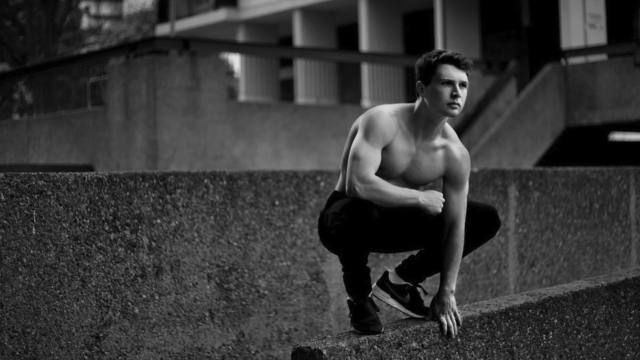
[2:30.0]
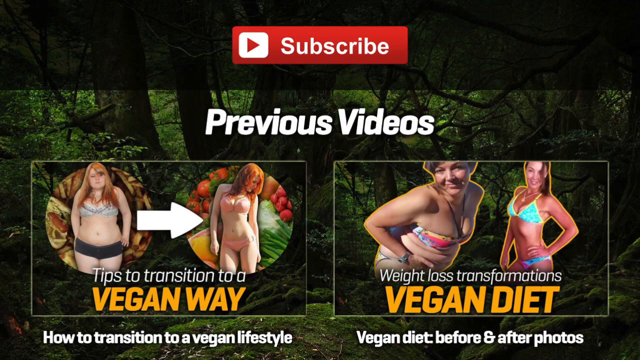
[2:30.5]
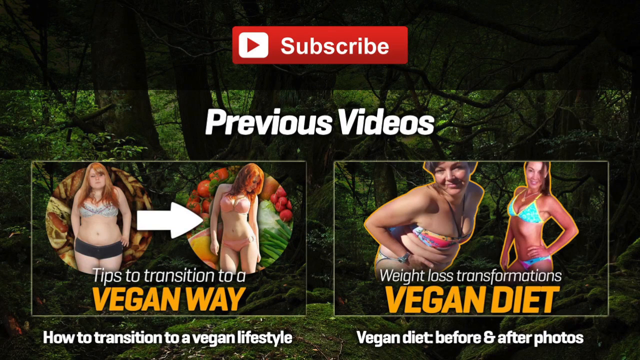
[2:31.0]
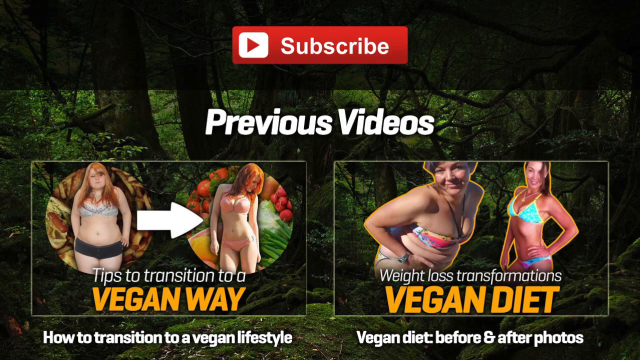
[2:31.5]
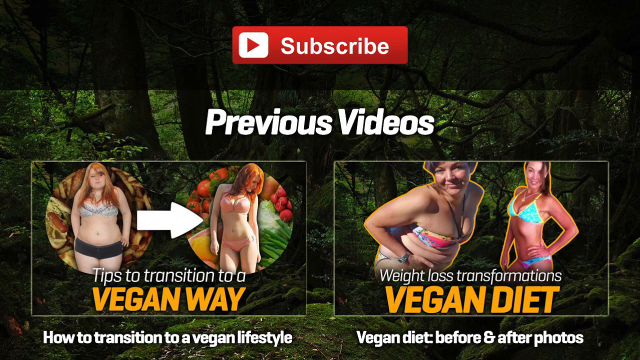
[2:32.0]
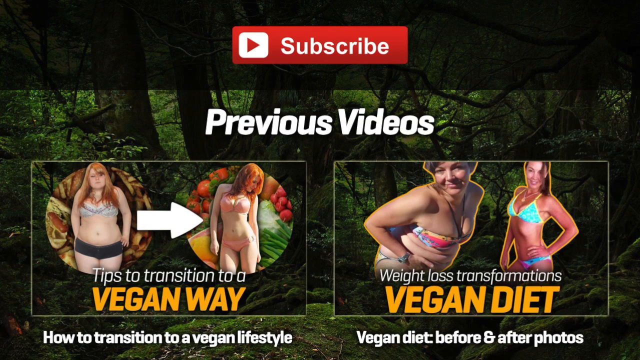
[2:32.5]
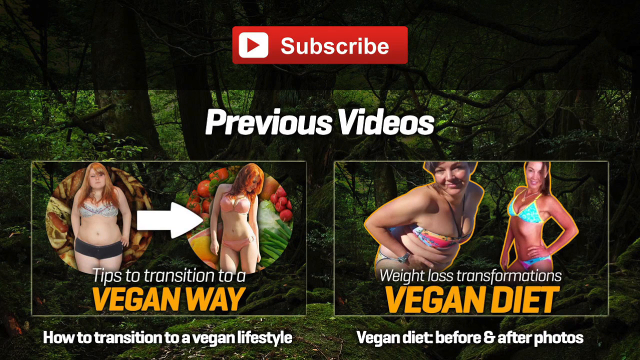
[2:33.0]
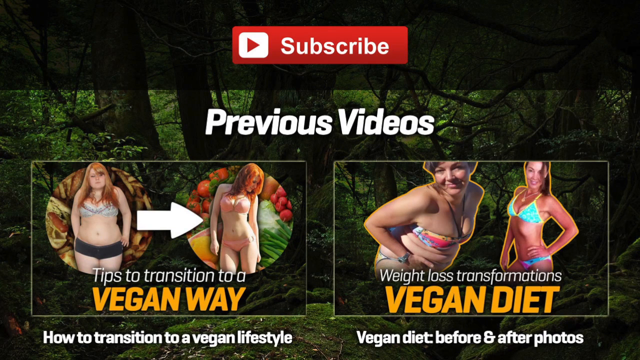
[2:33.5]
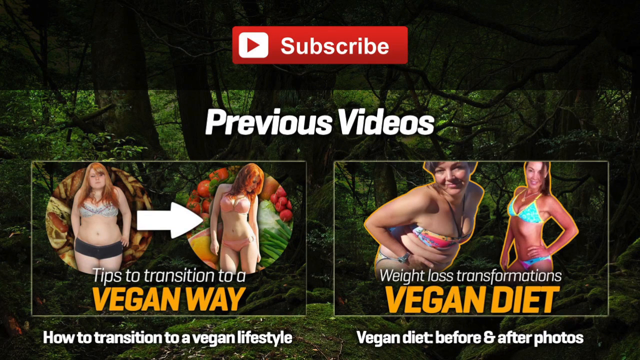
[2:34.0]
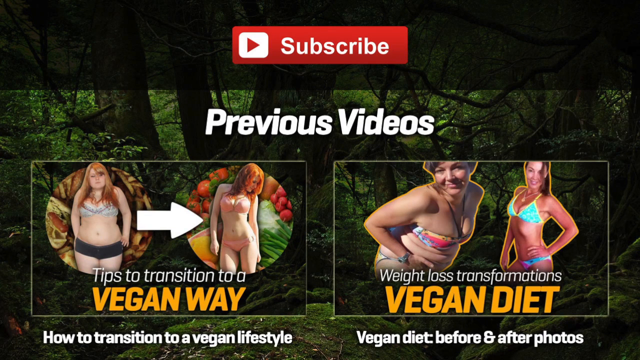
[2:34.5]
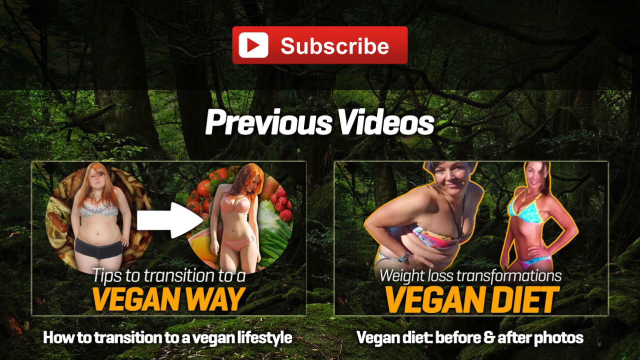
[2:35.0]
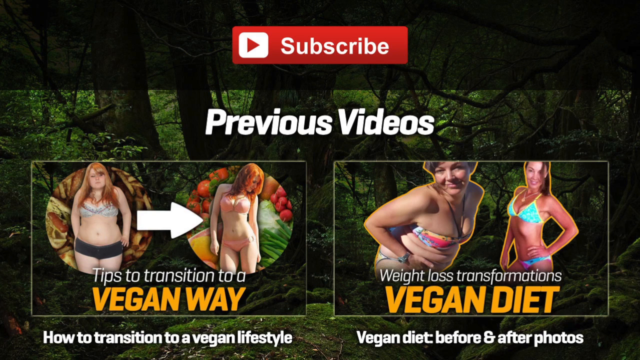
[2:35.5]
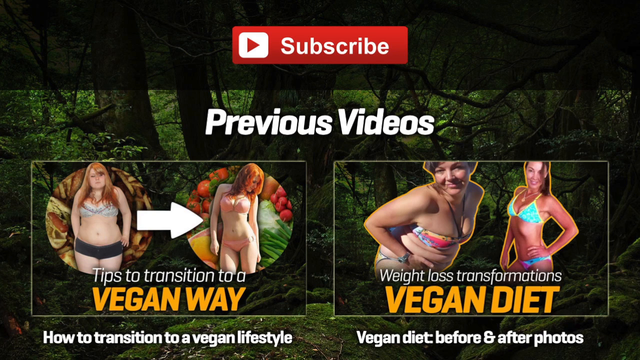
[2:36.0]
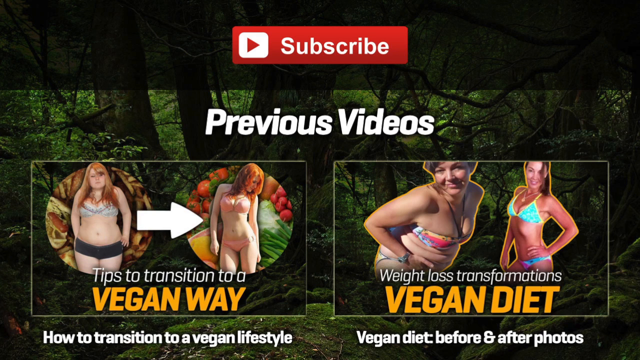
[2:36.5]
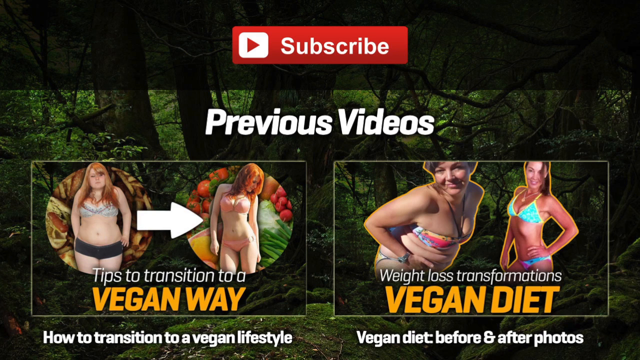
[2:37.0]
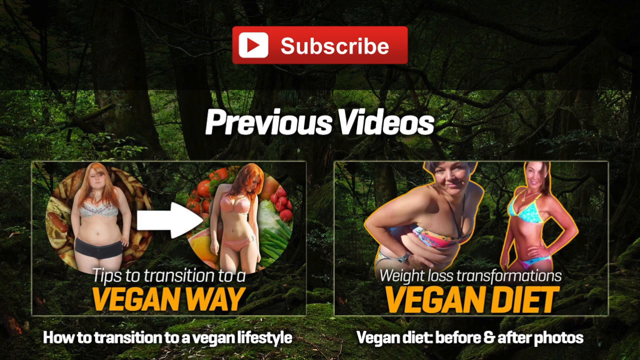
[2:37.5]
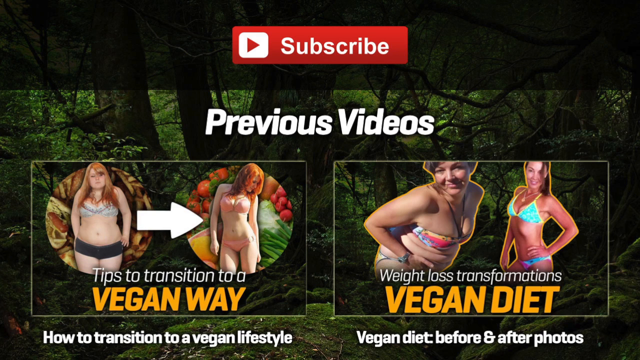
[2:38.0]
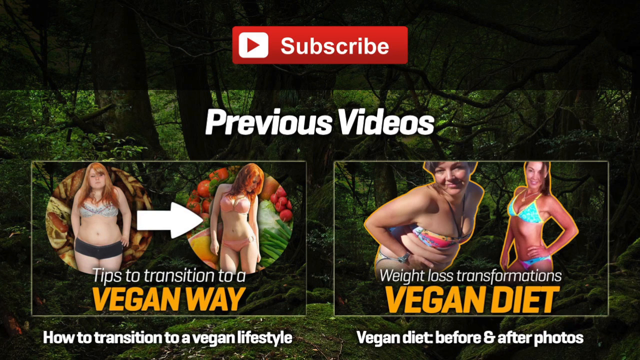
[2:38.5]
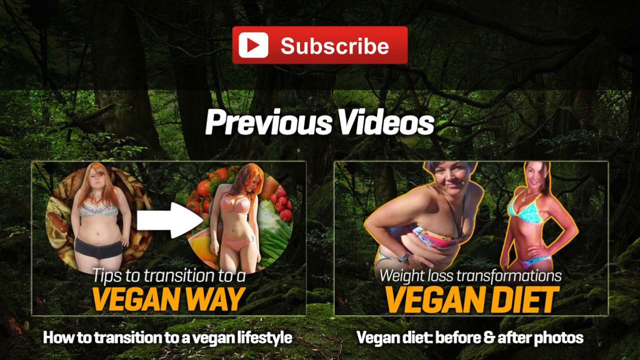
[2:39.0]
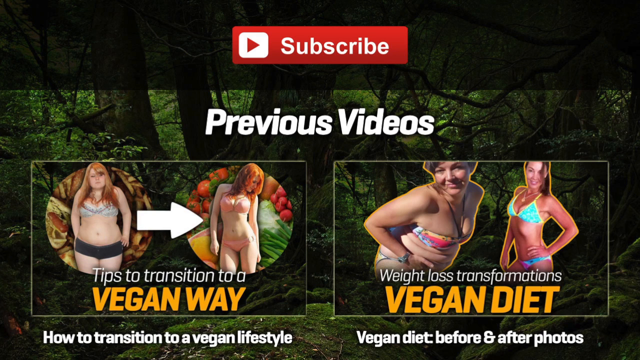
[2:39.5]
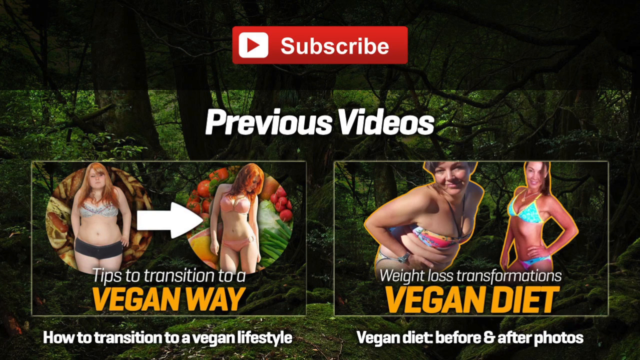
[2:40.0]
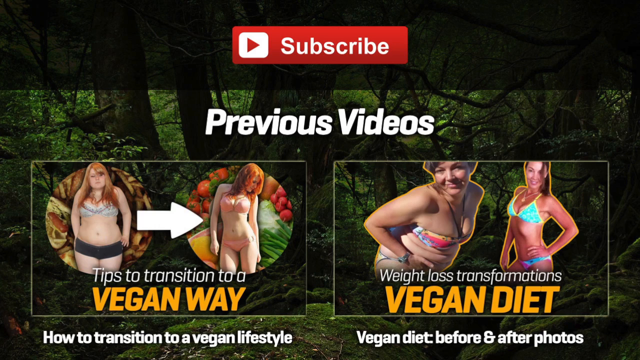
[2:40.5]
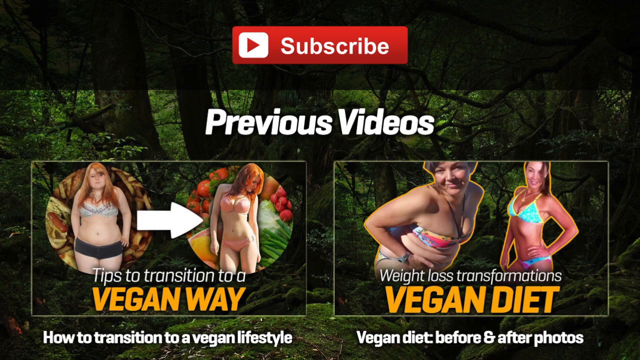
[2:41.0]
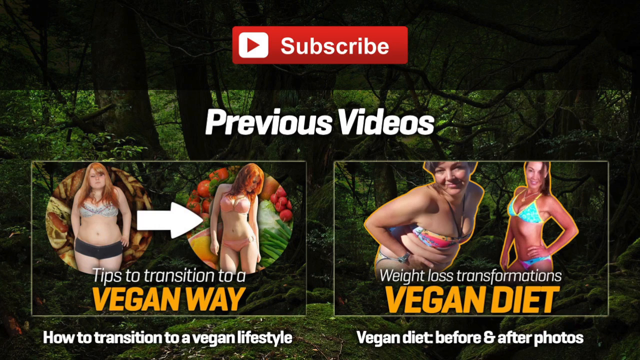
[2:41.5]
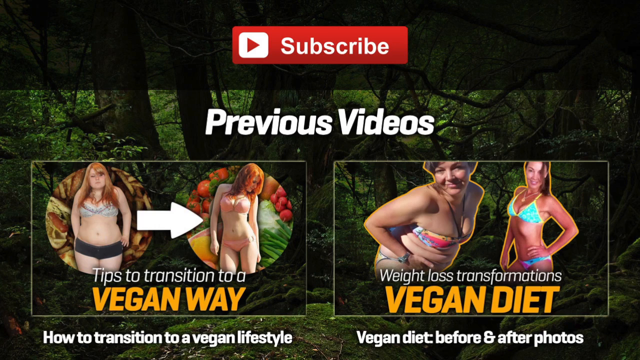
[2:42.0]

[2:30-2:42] The black and white image of the young man squatted down in an urban area is shown, followed by a screen with a black background. At the very top is a rectangle containing the YouTube emblem in white with "subscribe" next to it. Underneath is a forest background with "previous videos" in white on top, and two videos. The one on the left says "tips to transition to a vegan way"; on its left is a chubby young lady in a bikini with black bottoms and a light blue top, with a mess of unhealthy food behind her, and a white arrow points to a very slender woman wearing a pink bikini with fruits and vegetables behind her. The other video, to the right, shows a chubby woman on the left and a slender woman on the right, with "weight loss transformations vegan diet" underneath them.